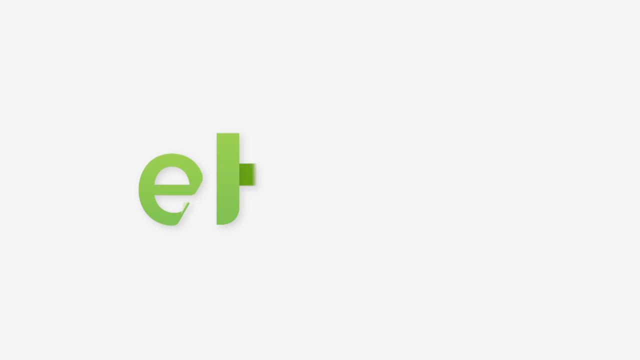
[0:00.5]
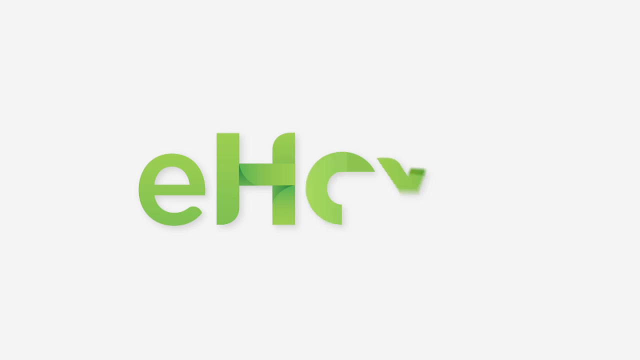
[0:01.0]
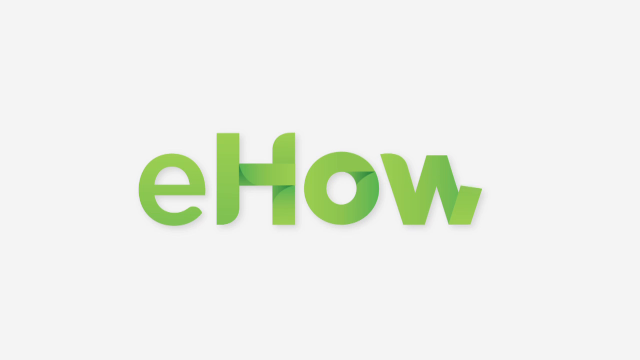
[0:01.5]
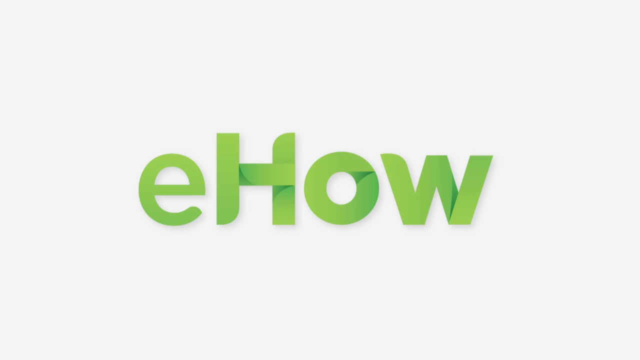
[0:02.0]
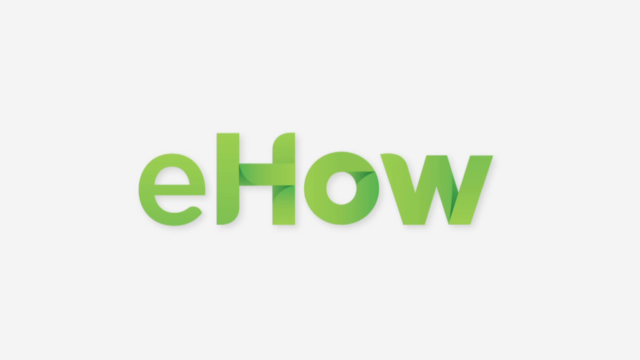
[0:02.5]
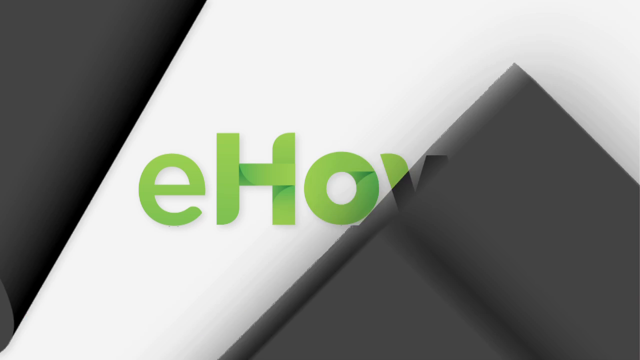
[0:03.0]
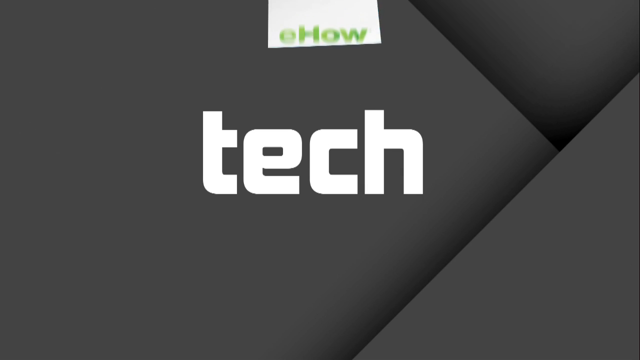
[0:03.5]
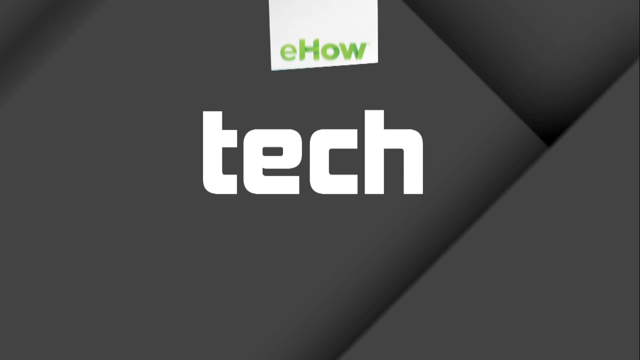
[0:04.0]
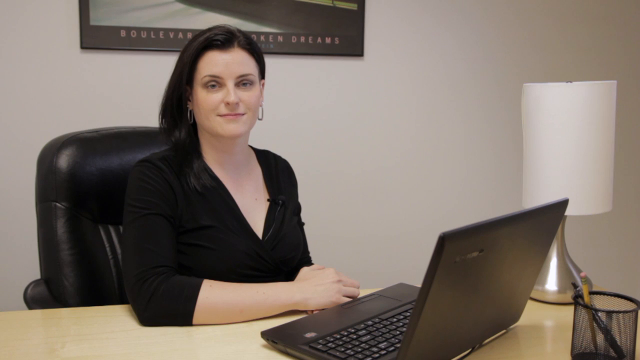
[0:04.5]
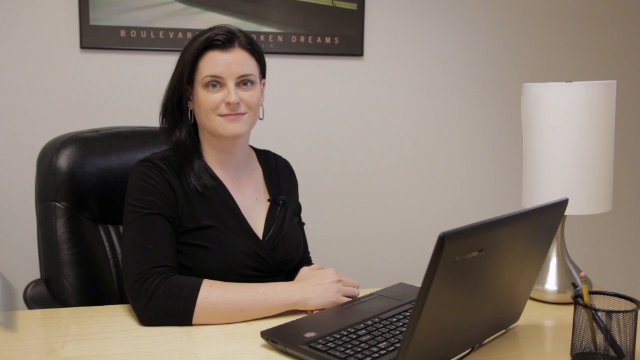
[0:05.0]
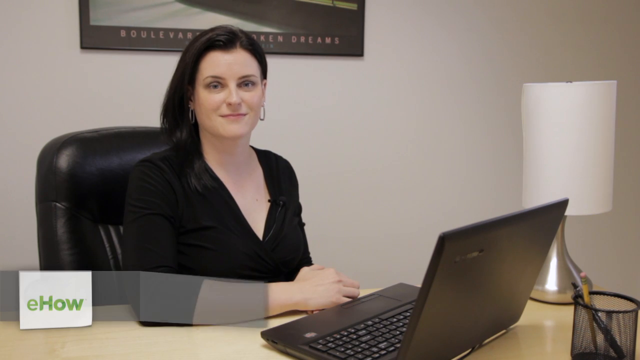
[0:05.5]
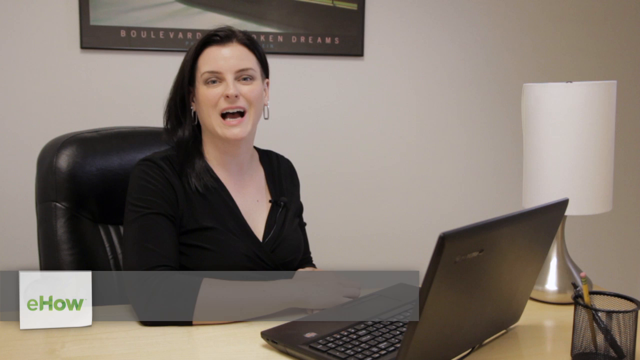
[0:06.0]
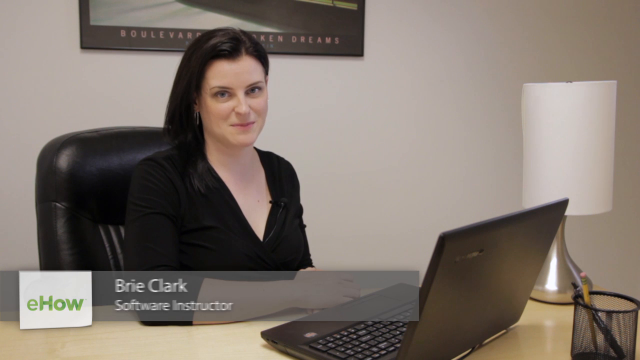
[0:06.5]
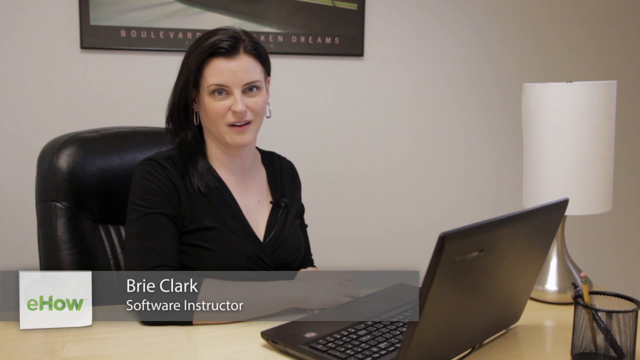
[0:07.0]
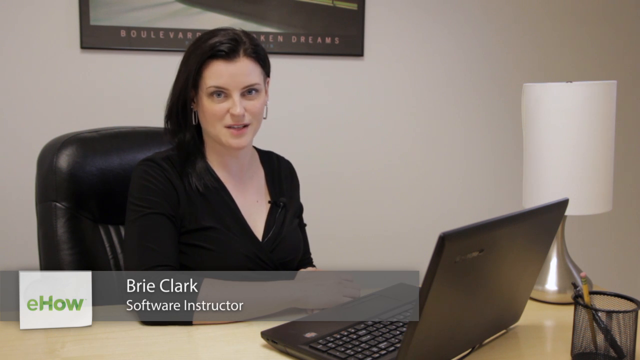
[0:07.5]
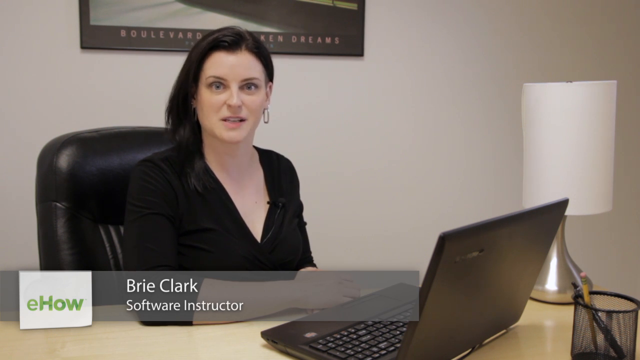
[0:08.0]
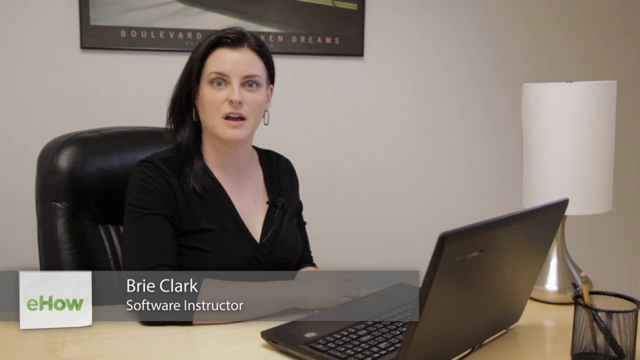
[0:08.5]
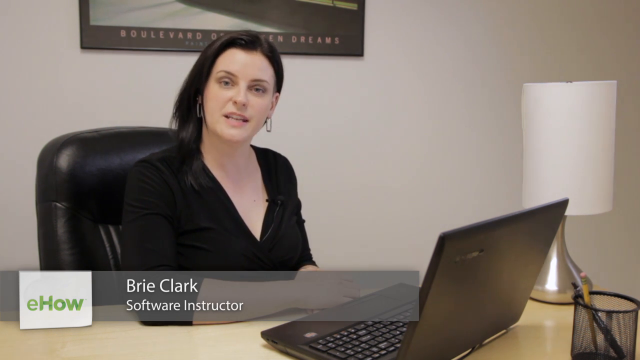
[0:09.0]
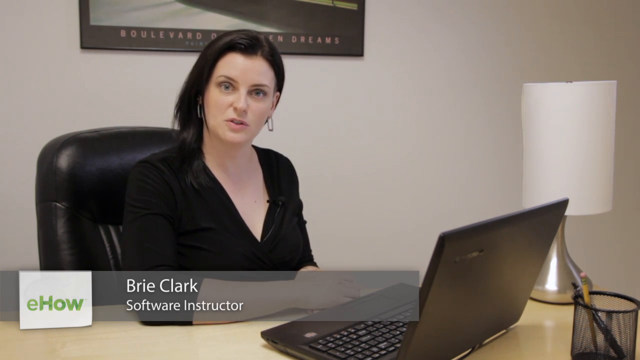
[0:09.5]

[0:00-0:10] The words "ehow" appear in green letters across the top, with the e in small letters and the how in capital letters. A woman named Brie Clark, a software instructor for ehow, sits at a desk in her office, facing forward and beginning to talk. She wears a brown outfit, has brown hair pulled over to the side, and wears loop earrings. A very modern, contemporary lamp is on the left side of her computer. She is working on a laptop, which is open. Behind her is a big picture in neutral colors, mostly browns and creams, with a title underneath it.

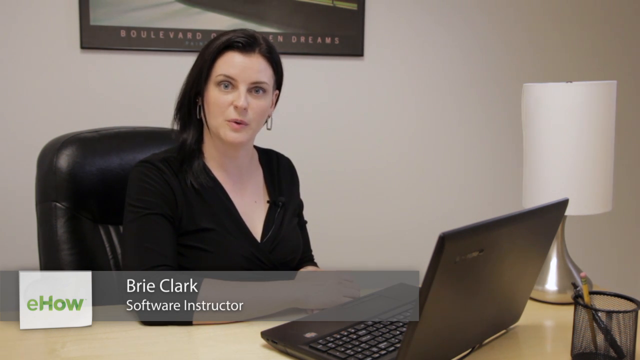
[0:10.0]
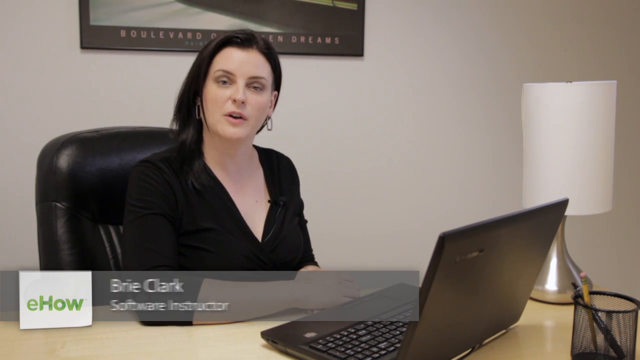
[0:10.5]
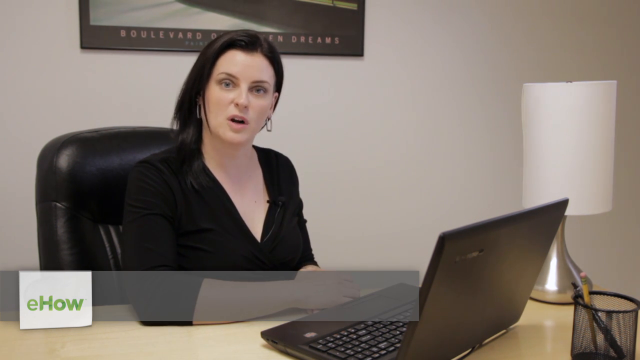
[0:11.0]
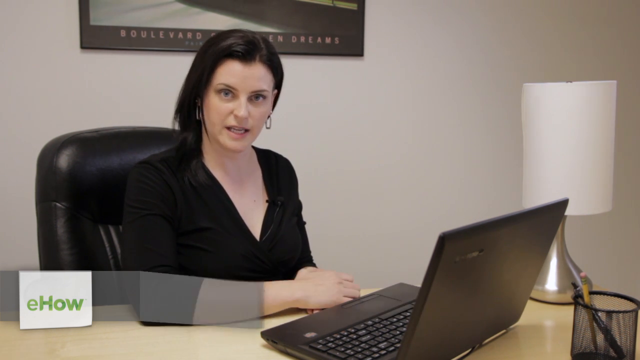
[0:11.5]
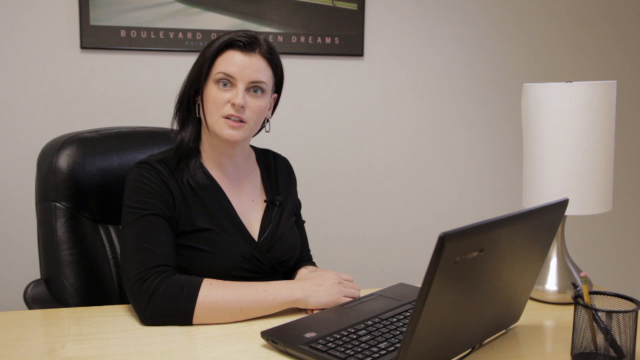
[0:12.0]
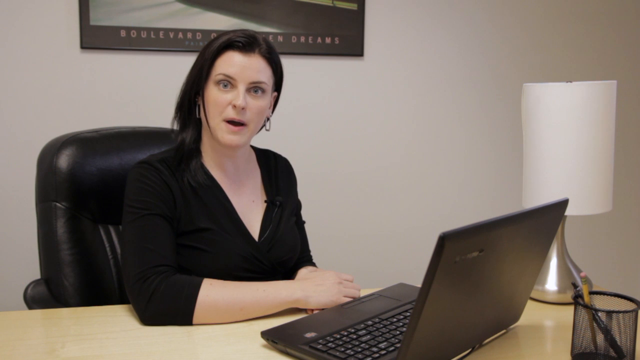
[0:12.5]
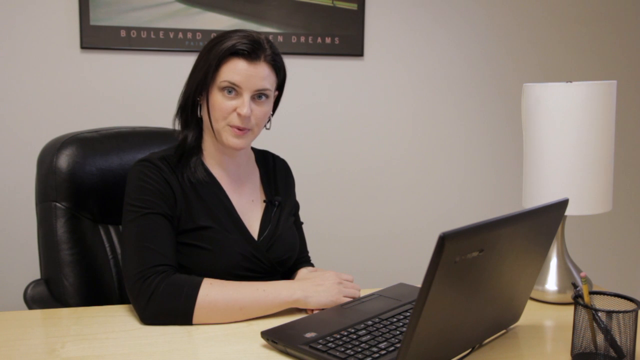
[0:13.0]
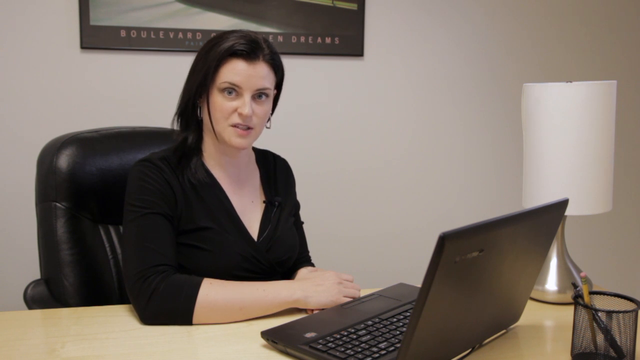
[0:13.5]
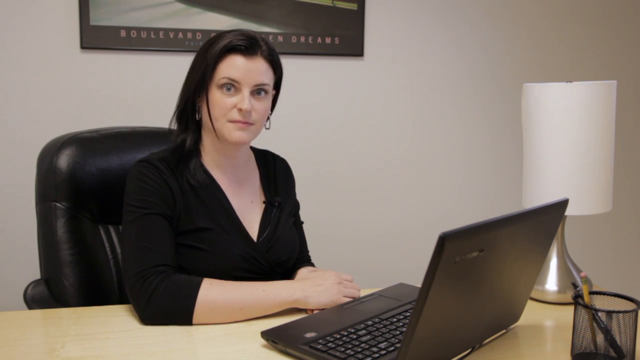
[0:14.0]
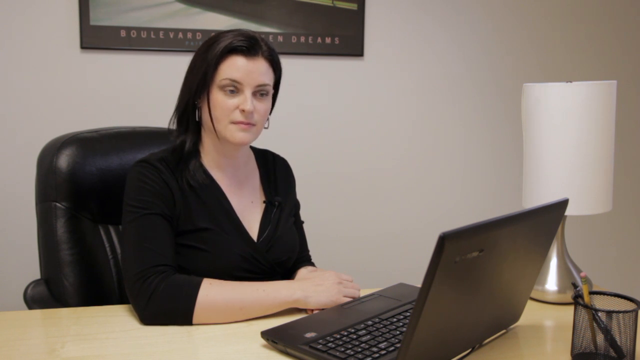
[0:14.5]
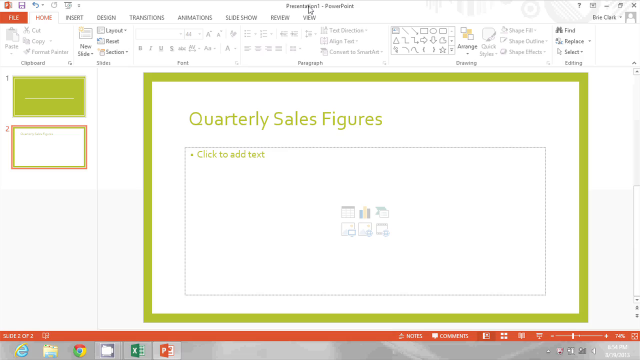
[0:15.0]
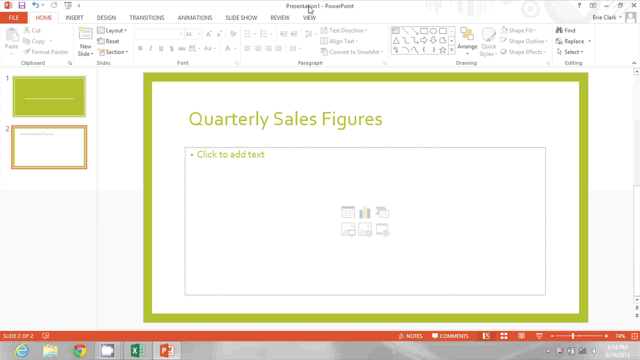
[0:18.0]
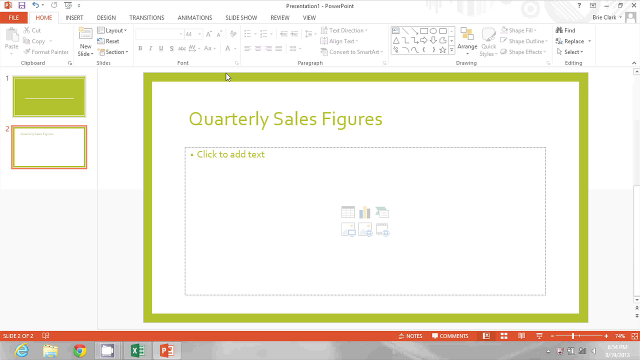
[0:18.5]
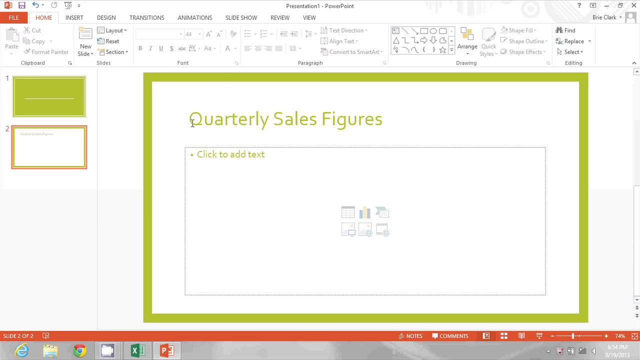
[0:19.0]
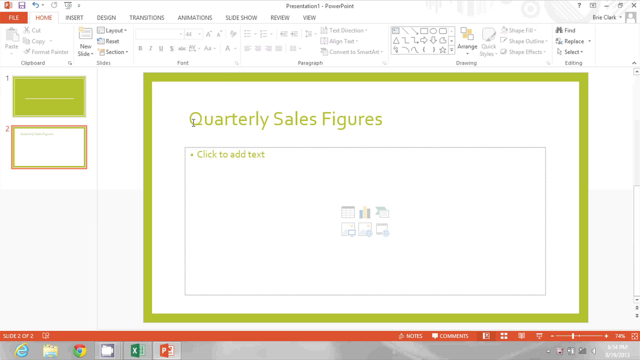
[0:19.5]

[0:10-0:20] A woman named Bree Clark, a software instructor, sits at her desk facing the camera, which is to her right. She has brown hair pulled over to her shoulder and wears loop earrings, and she is working on an open laptop; the top of the laptop is visible. A screen then appears reading "quarterly sales figures" in lime green wording that matches the green trim. She works for a company named ehow, spelled E-H-O-W, with a small E and big H-O-W. Above the quarterly sales figures there is faint gray information, and text reads "click to add text."